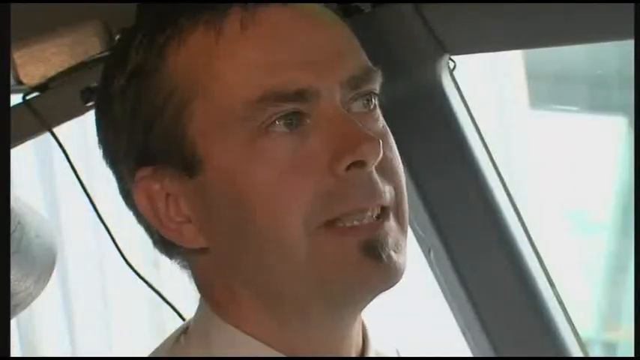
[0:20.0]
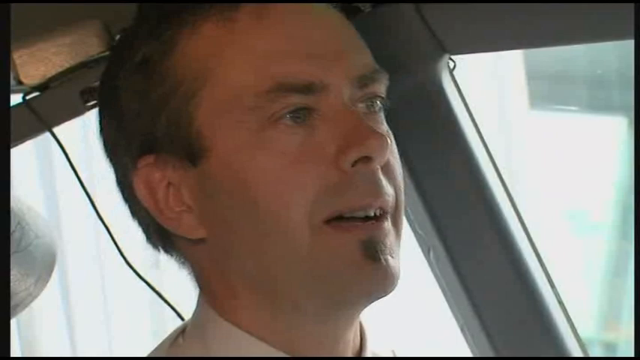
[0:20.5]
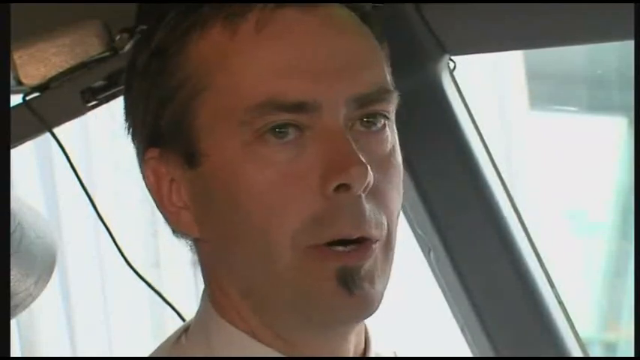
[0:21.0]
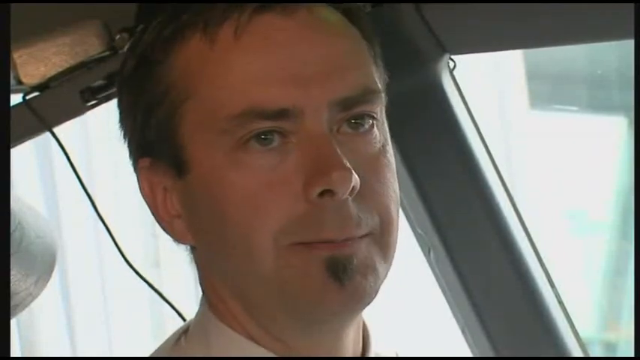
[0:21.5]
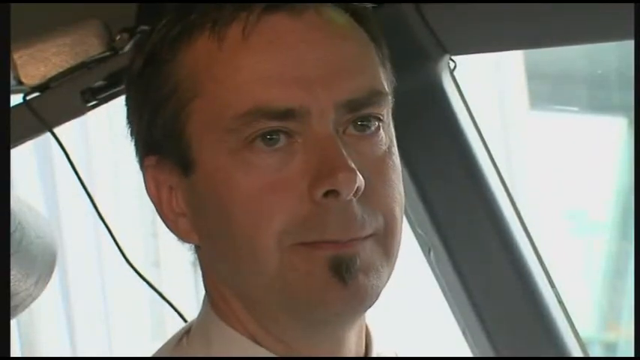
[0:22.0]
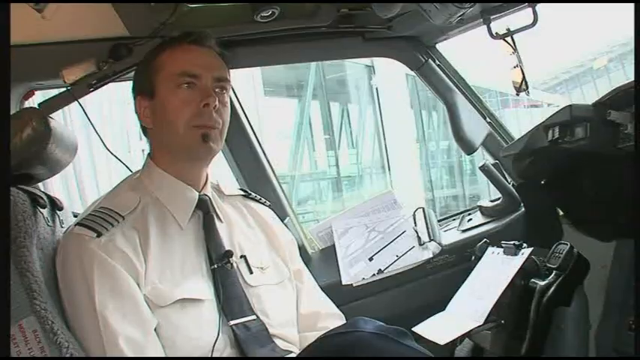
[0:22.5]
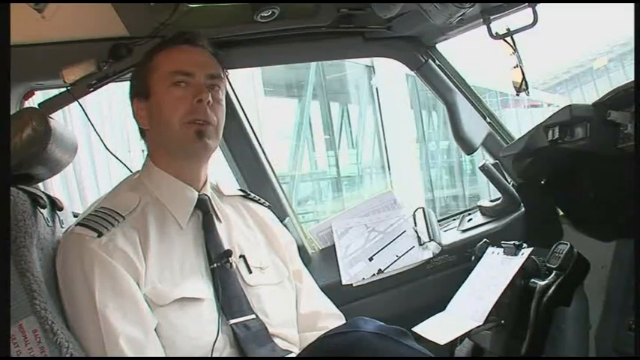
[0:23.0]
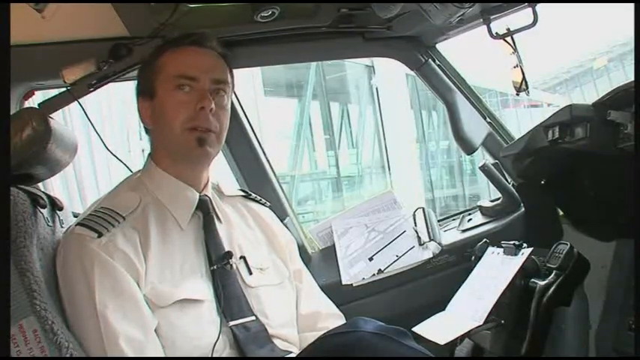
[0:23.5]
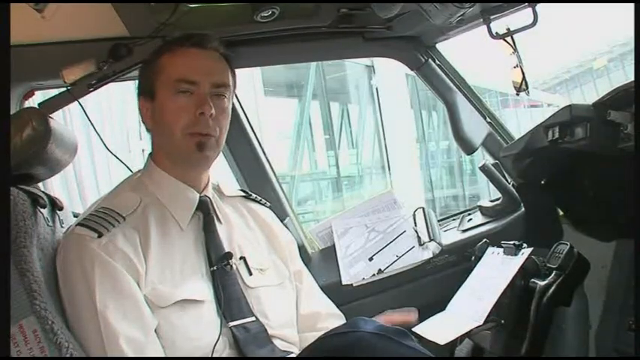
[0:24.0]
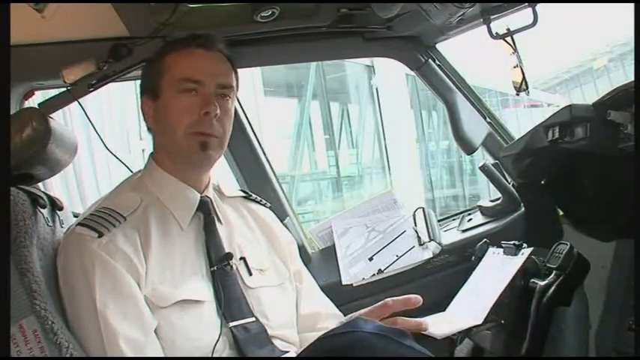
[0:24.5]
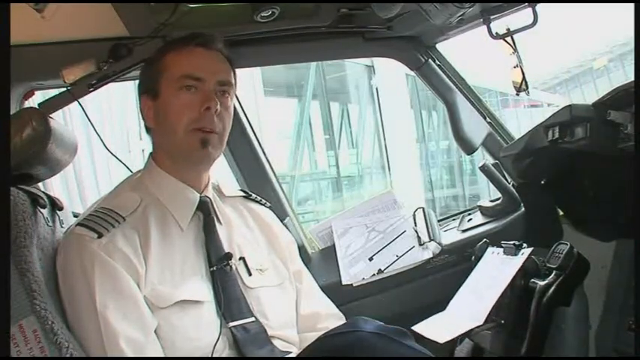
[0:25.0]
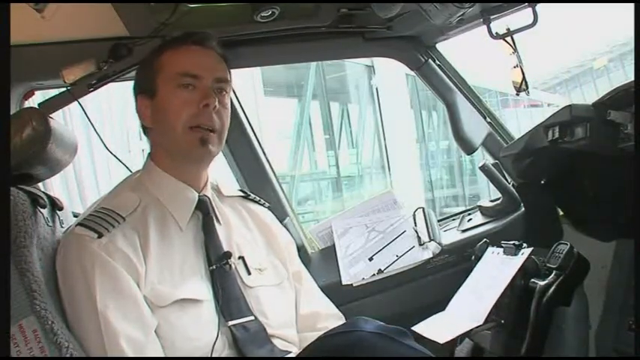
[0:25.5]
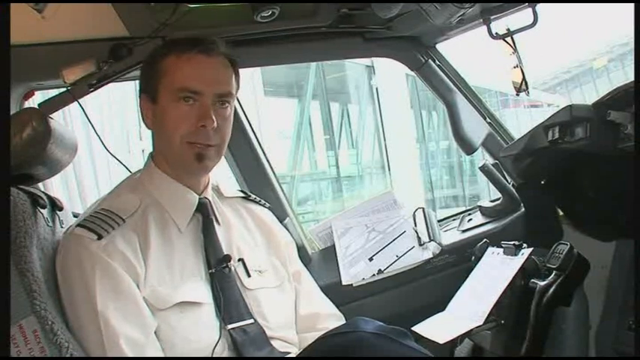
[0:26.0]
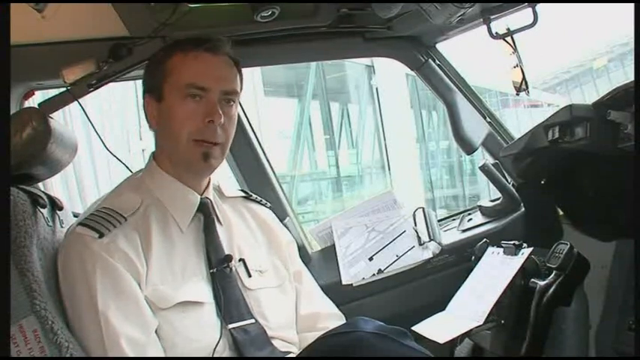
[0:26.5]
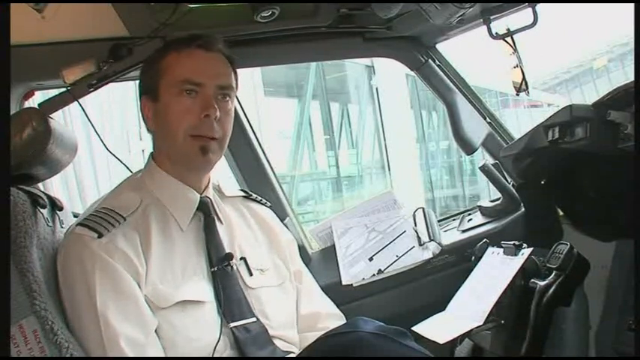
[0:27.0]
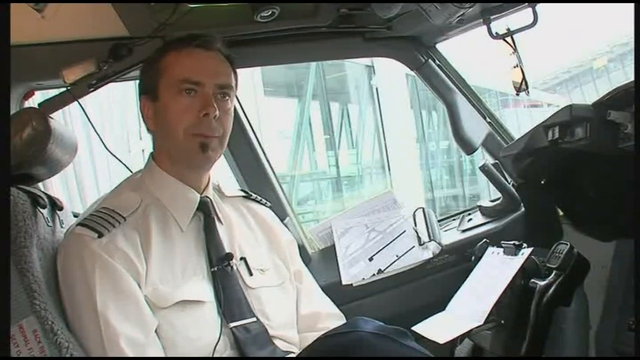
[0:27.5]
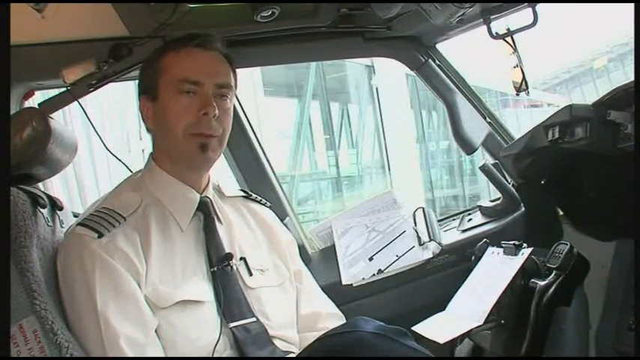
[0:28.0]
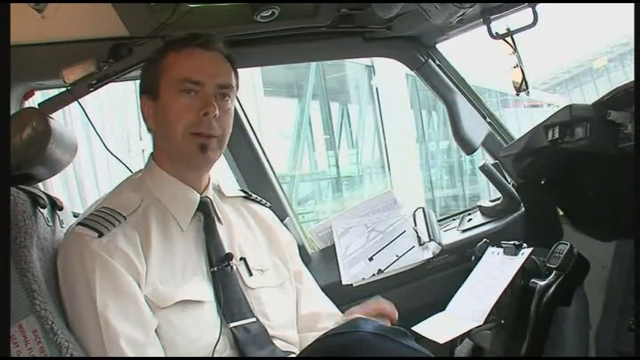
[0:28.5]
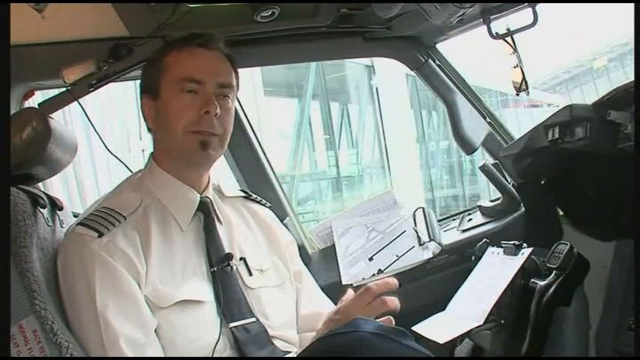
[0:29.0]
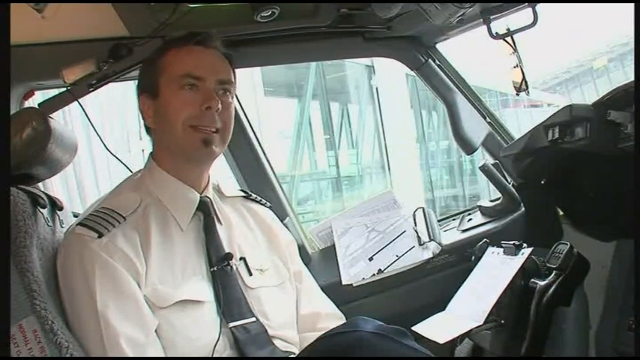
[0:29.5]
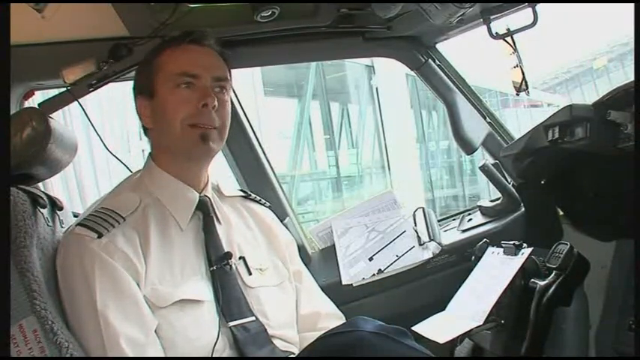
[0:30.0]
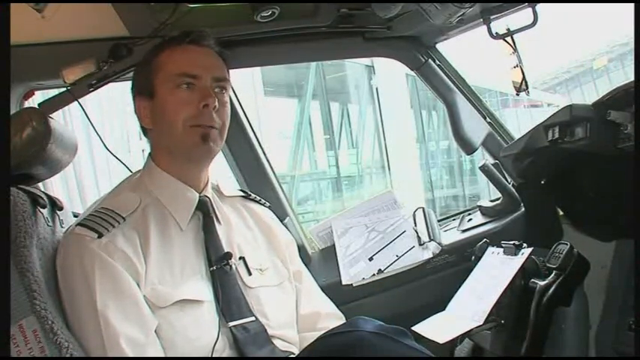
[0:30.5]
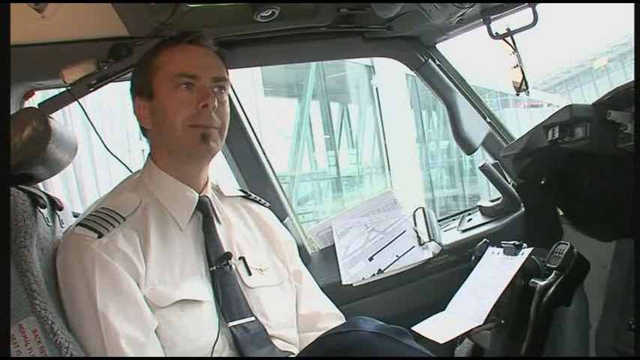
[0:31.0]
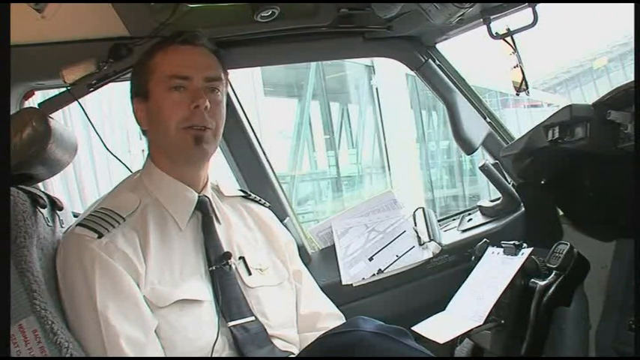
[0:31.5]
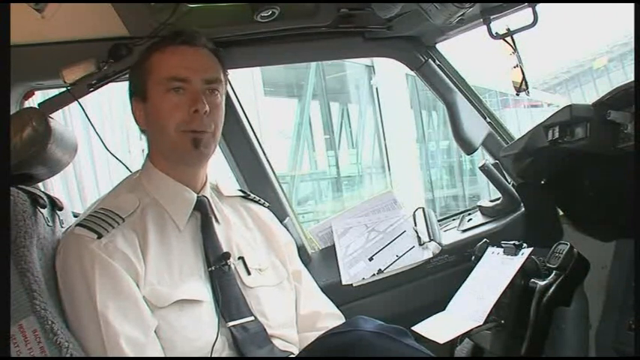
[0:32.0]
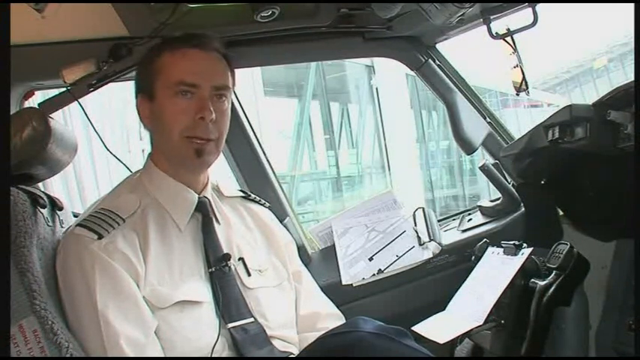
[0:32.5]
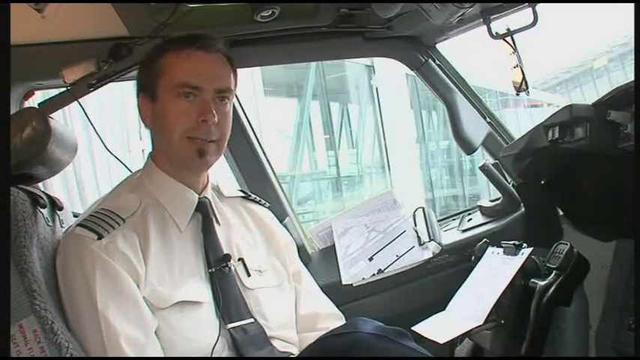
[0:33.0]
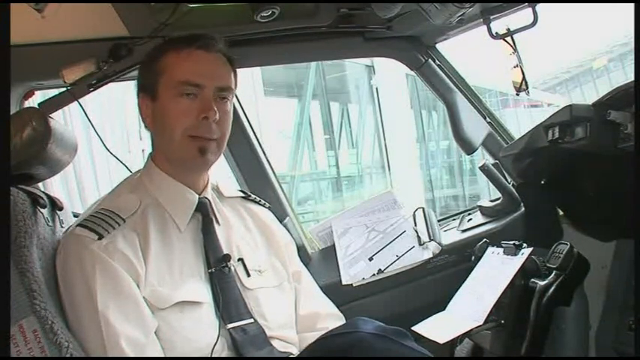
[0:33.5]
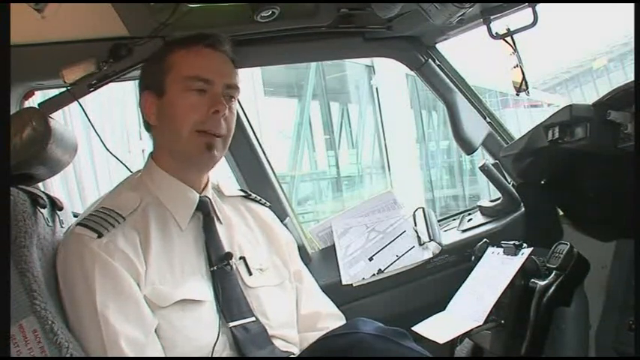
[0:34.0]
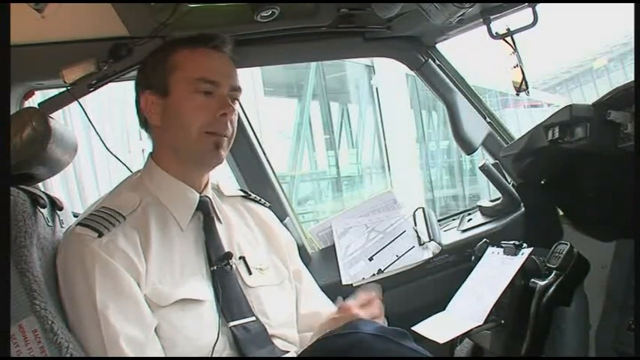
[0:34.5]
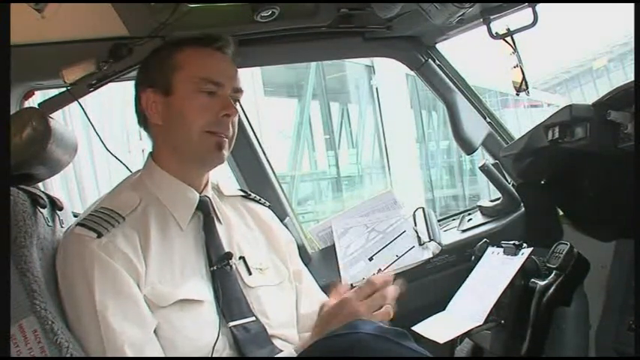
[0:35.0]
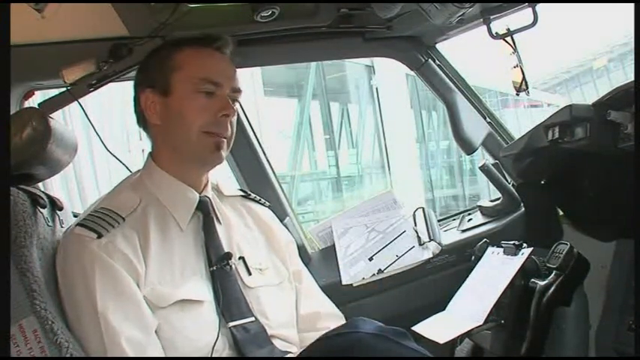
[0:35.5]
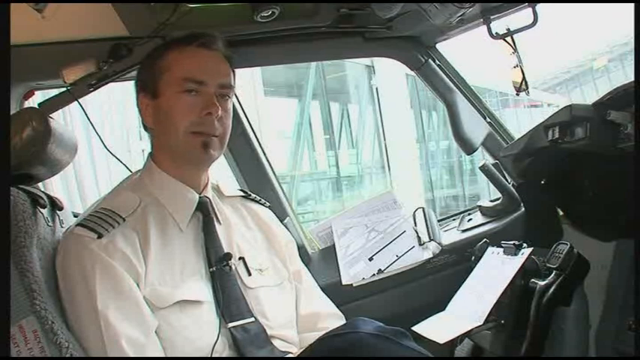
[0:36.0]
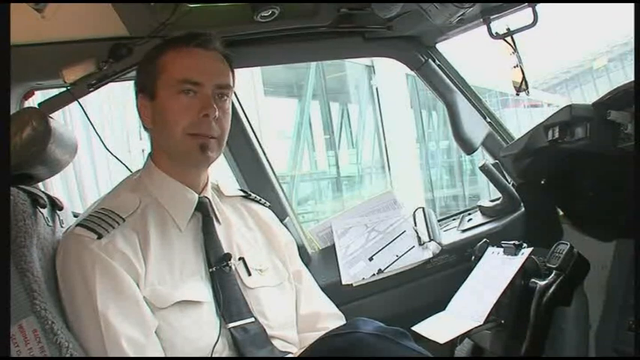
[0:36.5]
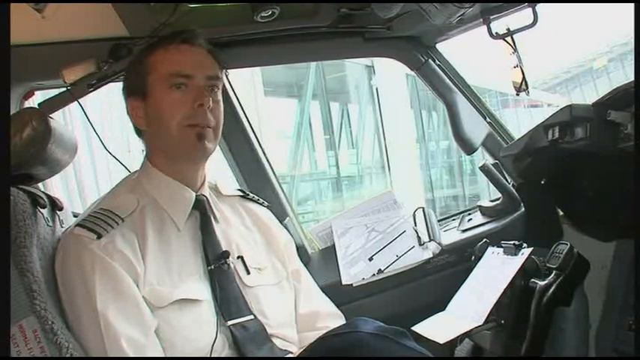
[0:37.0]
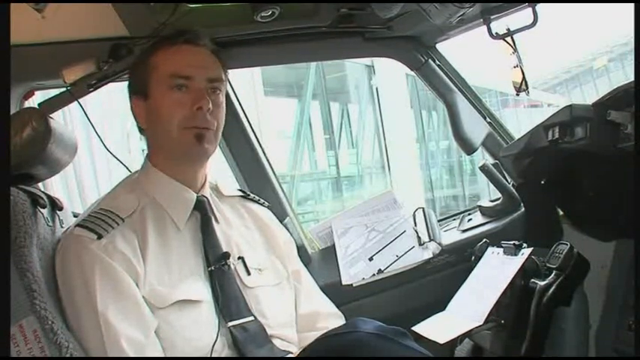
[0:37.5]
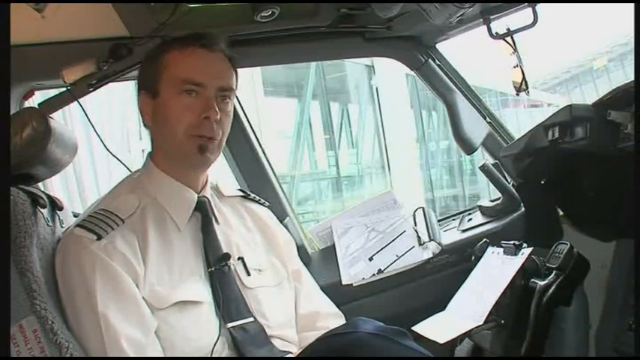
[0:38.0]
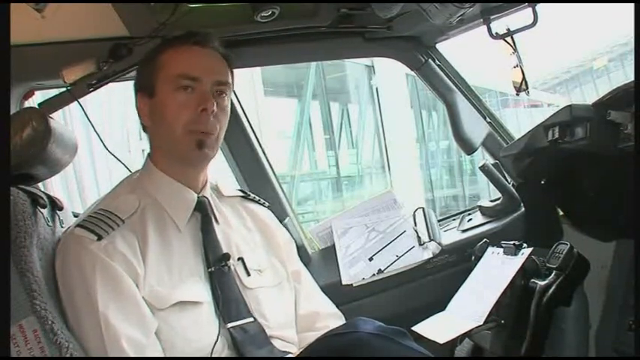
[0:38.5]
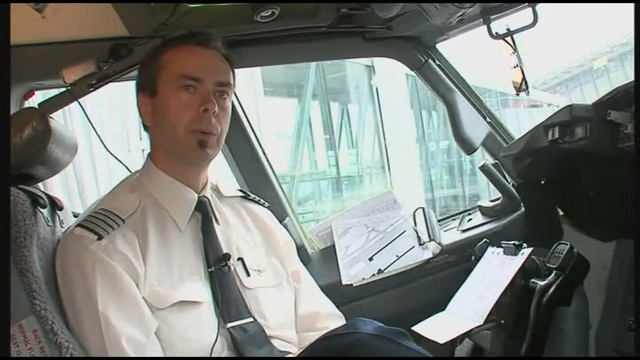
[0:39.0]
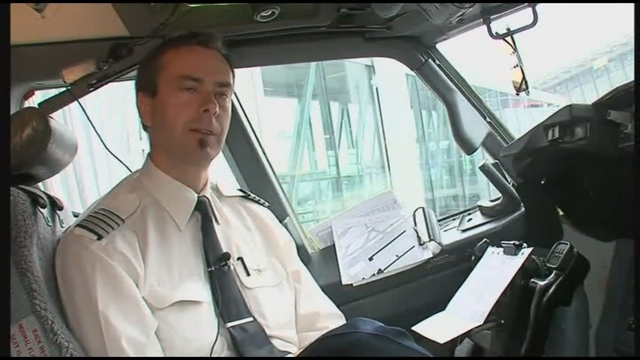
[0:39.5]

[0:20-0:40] The man continues talking. He moves his hand a bit and ends up moving the piece of paper in front of him, and he keeps moving his hand periodically, but not much. He also nods on some occasions. He speaks very slowly and formally, without much excitement, with a calm and serious demeanor, speaking to the interviewer throughout the shot. He is in the driver's seat, with a window behind him and a windshield, and there is what looks like a wheel. Because of how the video is framed, it is unclear whether he is in a car or a boat, but he is definitely in a vehicle.